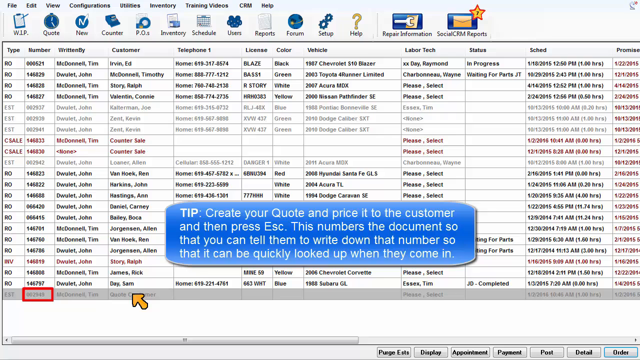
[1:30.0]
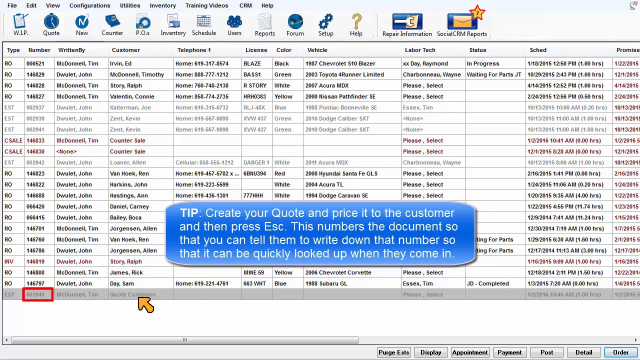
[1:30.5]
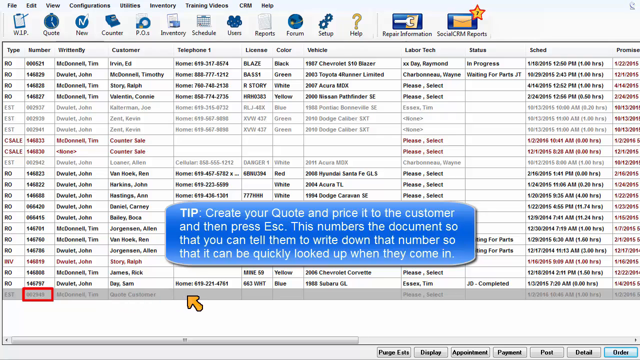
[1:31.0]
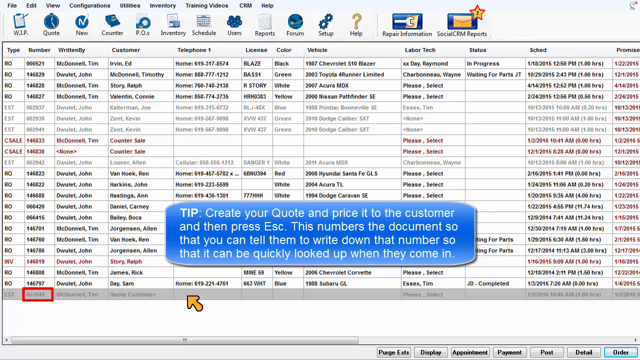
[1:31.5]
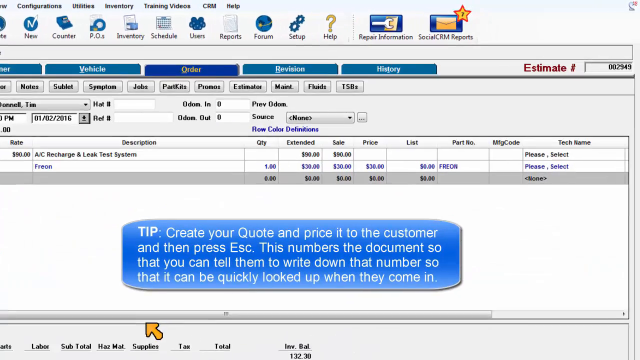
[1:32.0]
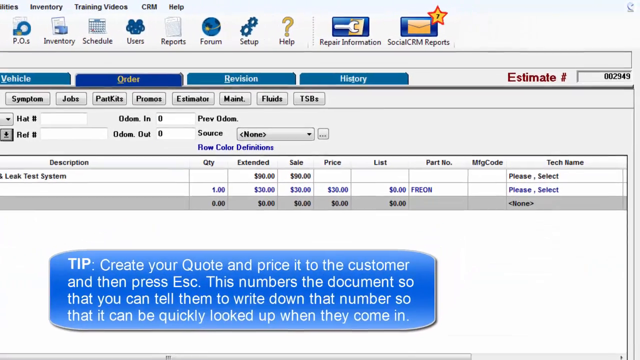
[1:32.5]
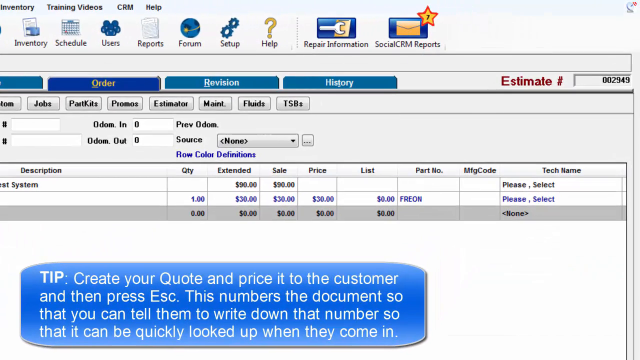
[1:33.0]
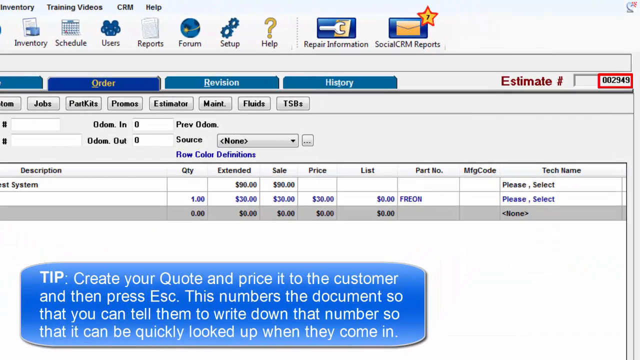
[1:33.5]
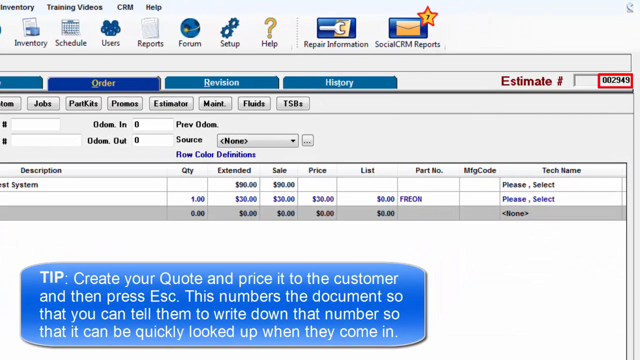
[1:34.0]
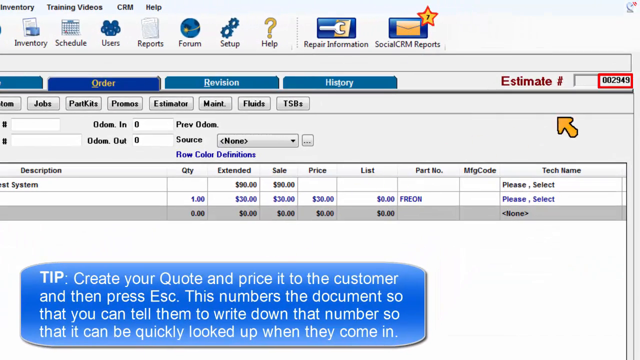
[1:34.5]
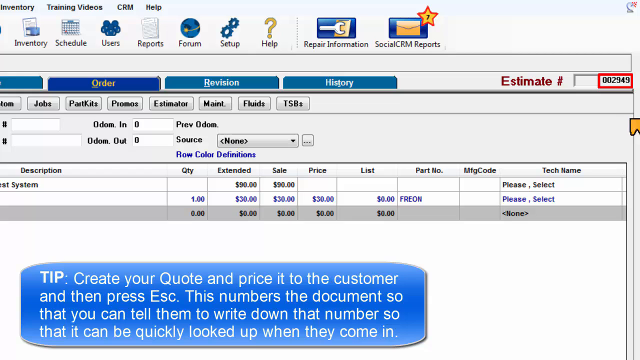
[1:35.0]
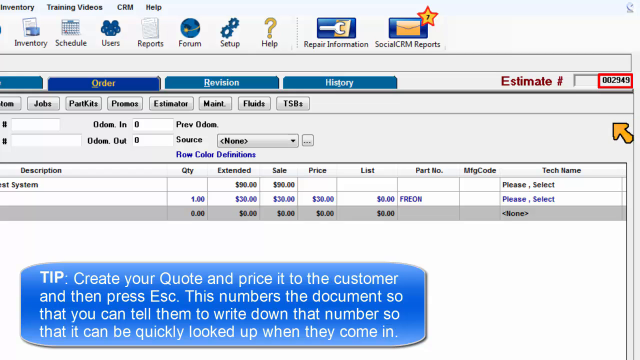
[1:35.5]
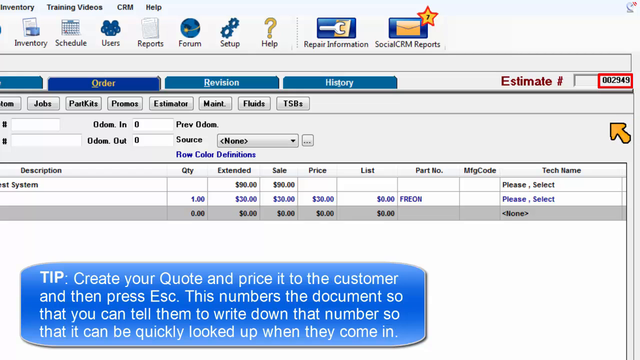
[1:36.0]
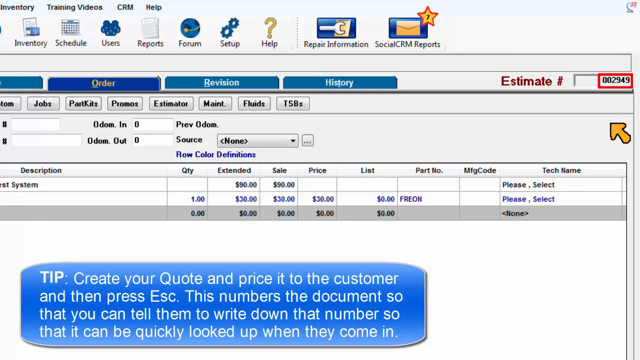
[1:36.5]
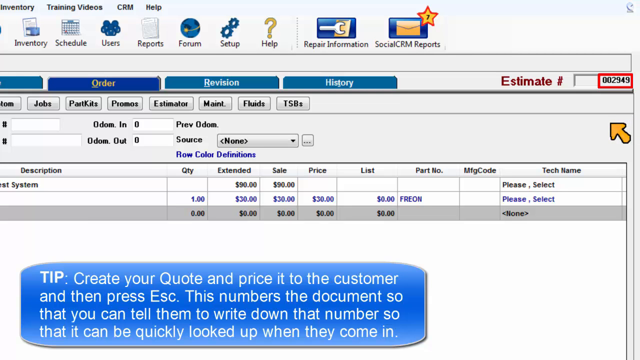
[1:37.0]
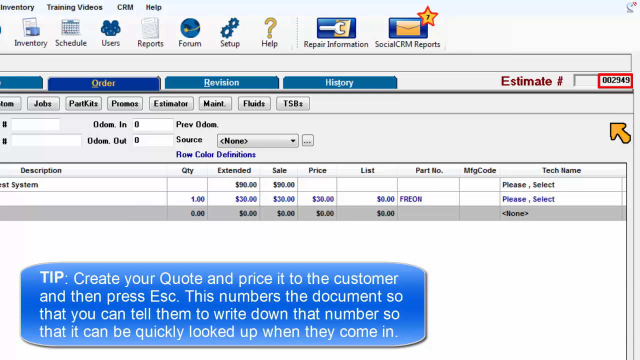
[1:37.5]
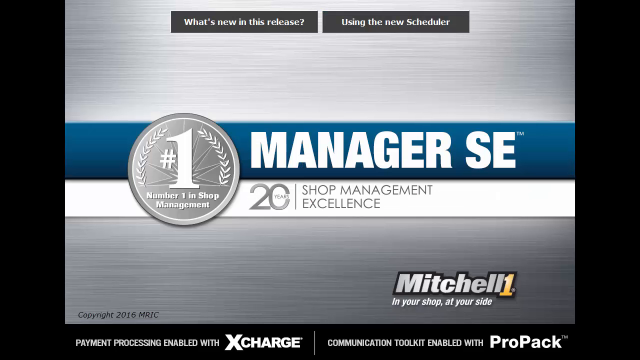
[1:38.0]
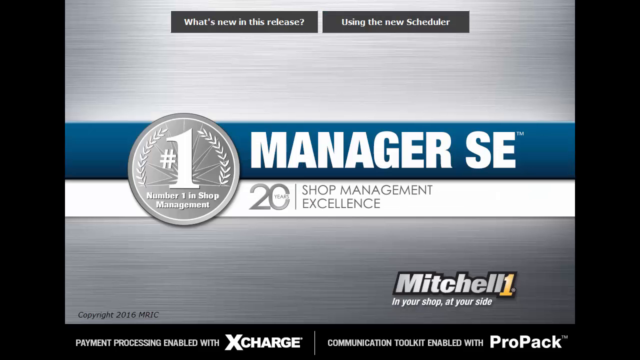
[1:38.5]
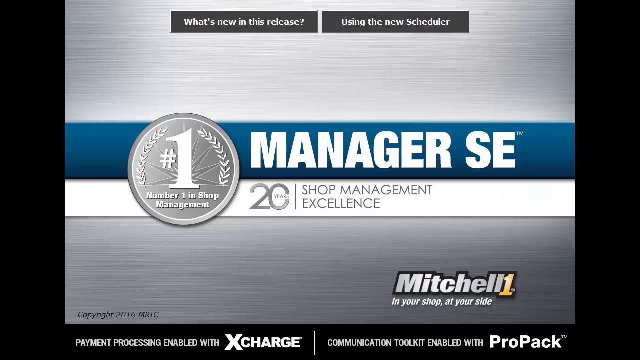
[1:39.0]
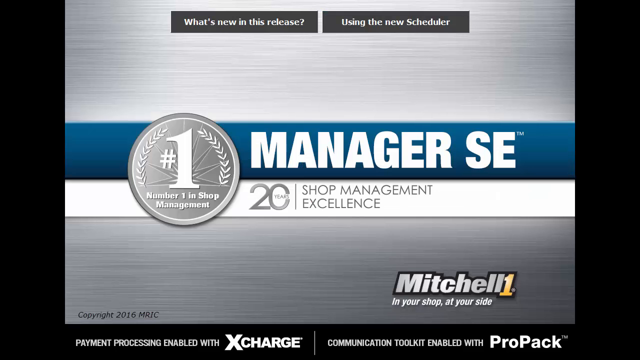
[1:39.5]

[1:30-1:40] A transition screen shows a blue bubble with white text reading "If the discussion is far enough along to be talking about diagnosing vehicle symptoms or doing a scheduled service, this is best handled with a real estimate with customer name and vehicle selected." After another transition, a new bubble appears with text beginning "create your quote and price it." The mouse then moves over the work in progress screen and clicks it, revealing several names along with customers, their telephones, their licenses, the color of the car, the vehicle, the labor tech working, the status, the scheduled shift, and the type.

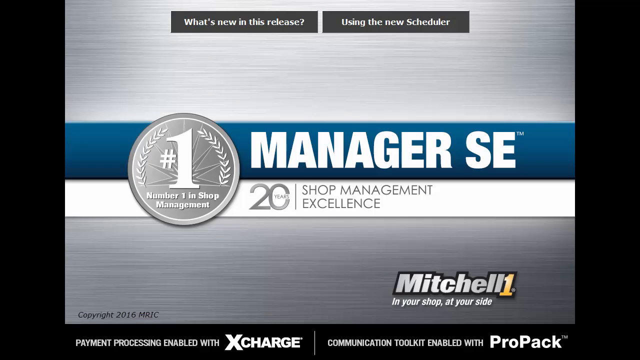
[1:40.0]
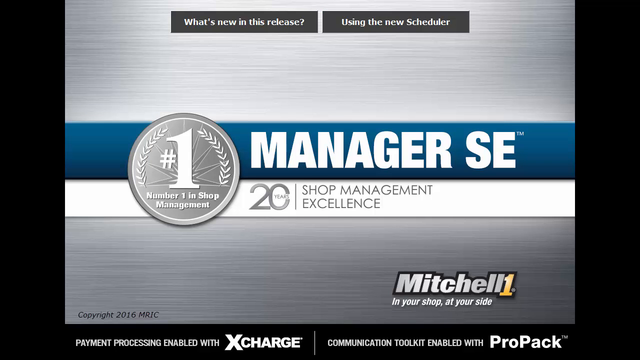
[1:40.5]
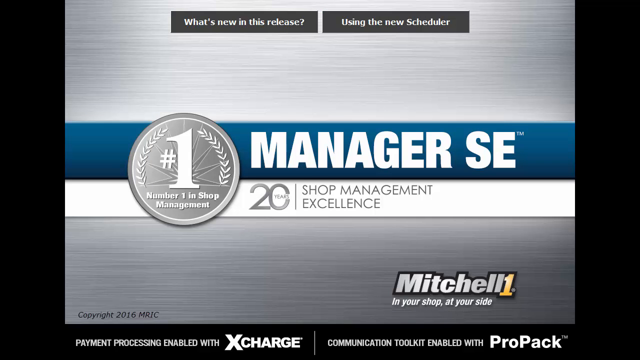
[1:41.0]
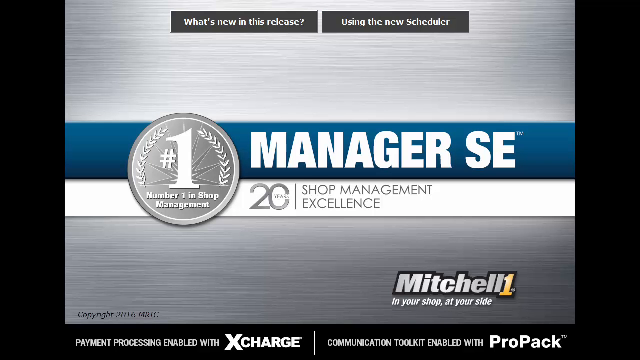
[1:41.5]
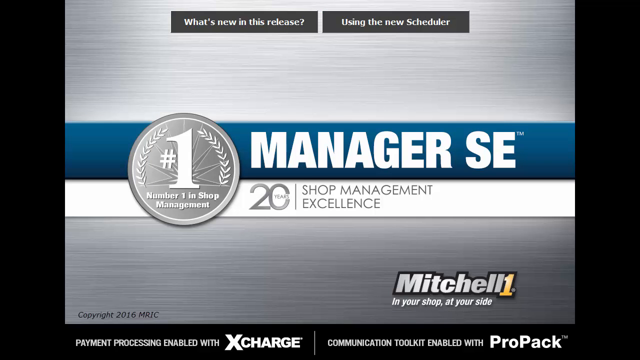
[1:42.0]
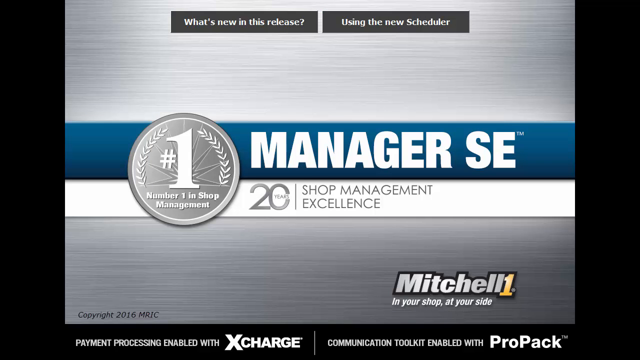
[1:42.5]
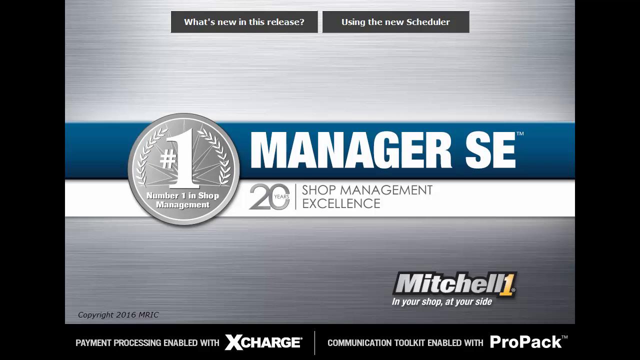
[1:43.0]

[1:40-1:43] The work in progress screen lists several names, with John DeWallet appearing several times. Customer names include Timothy McDowell, Ralph Story, Connie Valentine, Joe Cashman, Kevin Zent, Ren Von Hope, John Markins, Anne Hashtings, Camry Daniel, Boca Bailey, Allen Jorgensen and Sam Day, along with several numbers. Licenses and vehicle colors are also shown, including black, green, white, yellow, blue and red. Vehicles listed include a 2003 Toyota 4Runner, a 2007 Acura, a 2000 Nissan Pathfinder SE, a 2004 Hyundai Santa Fe, a 2004 Acura TL, a 1994 Dodge Caravan SE and a 2004 Chevrolet Corvette.